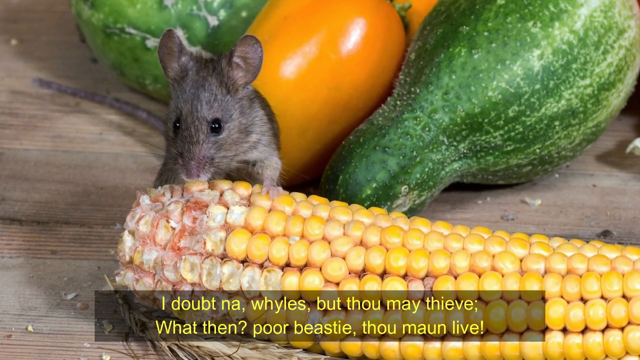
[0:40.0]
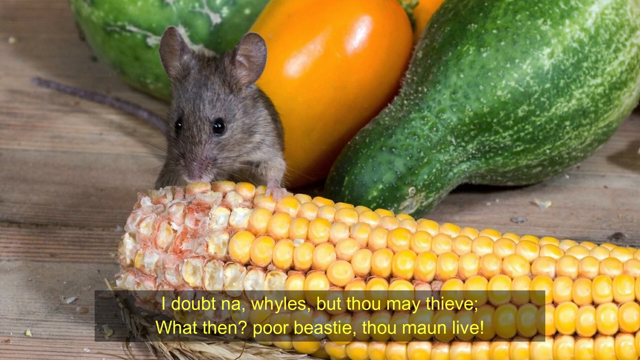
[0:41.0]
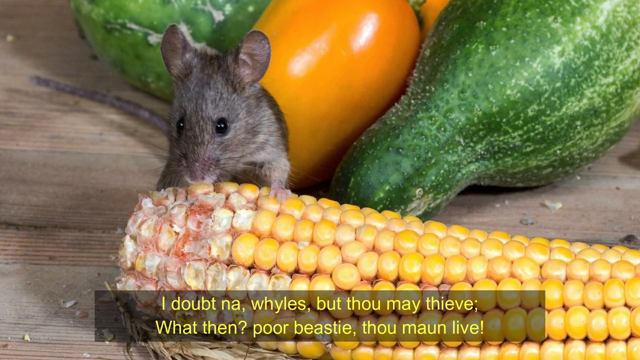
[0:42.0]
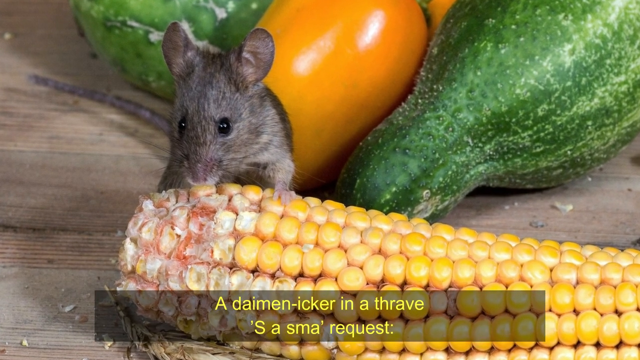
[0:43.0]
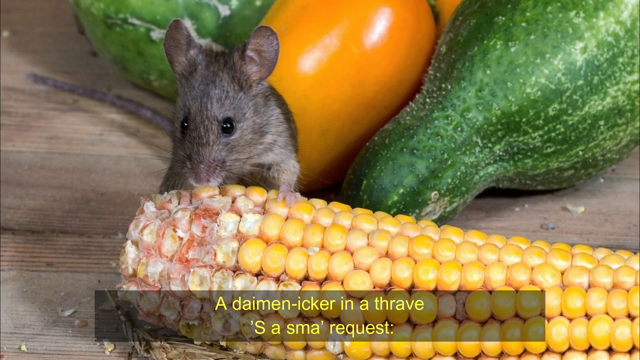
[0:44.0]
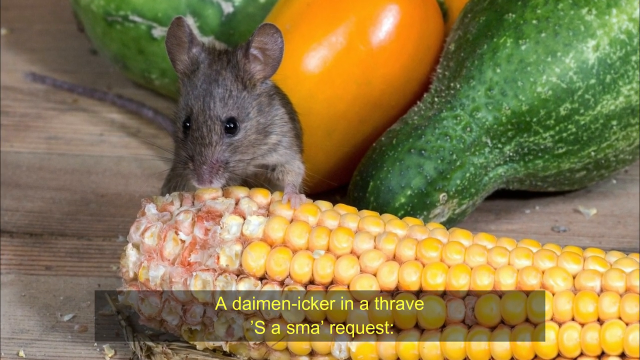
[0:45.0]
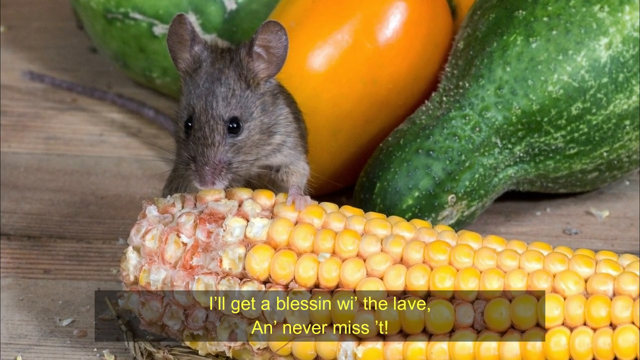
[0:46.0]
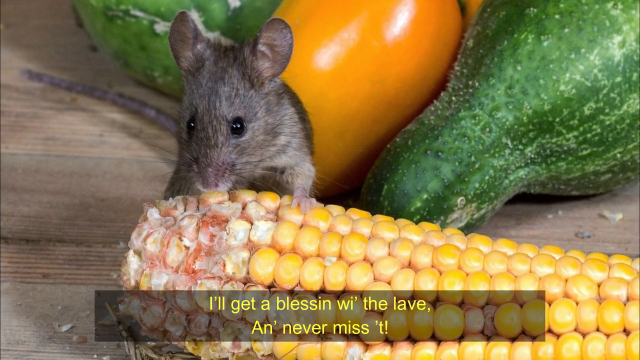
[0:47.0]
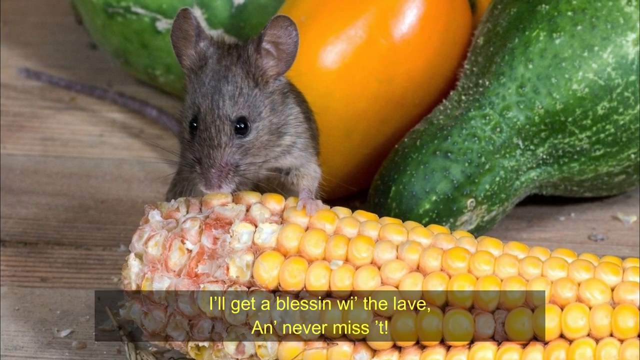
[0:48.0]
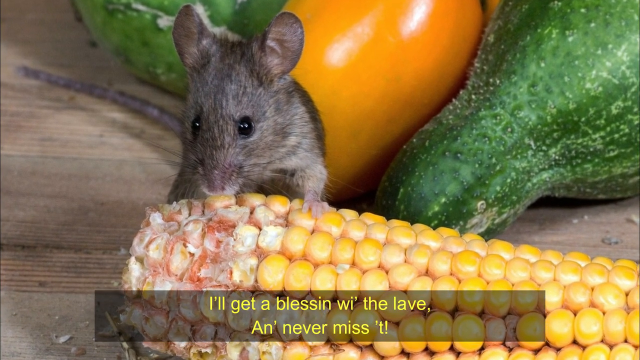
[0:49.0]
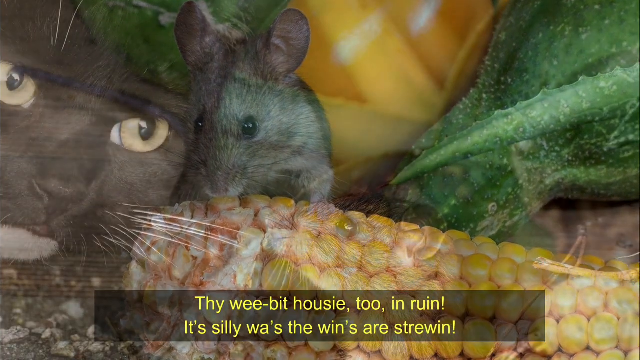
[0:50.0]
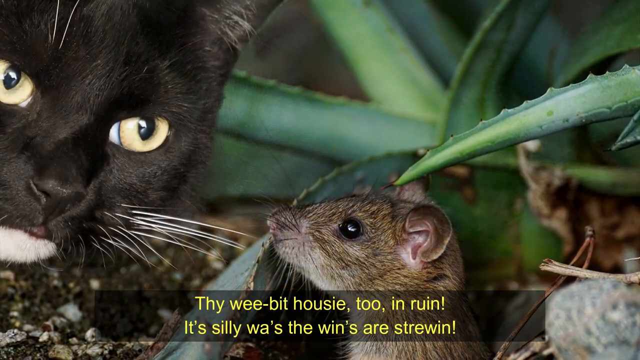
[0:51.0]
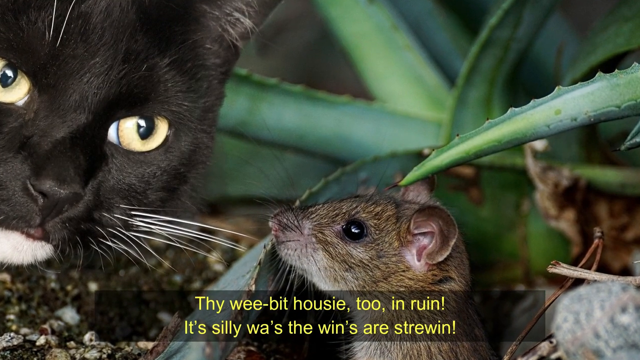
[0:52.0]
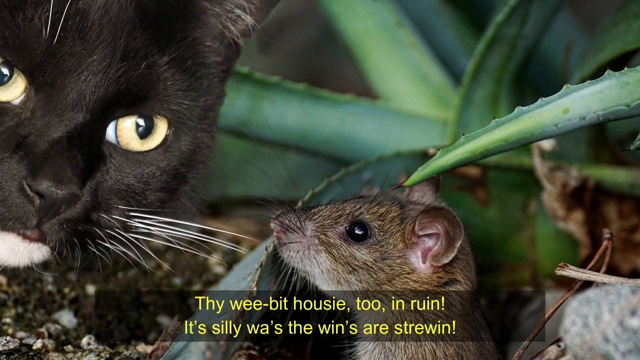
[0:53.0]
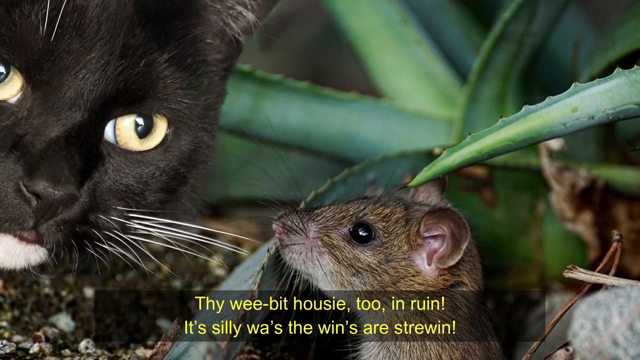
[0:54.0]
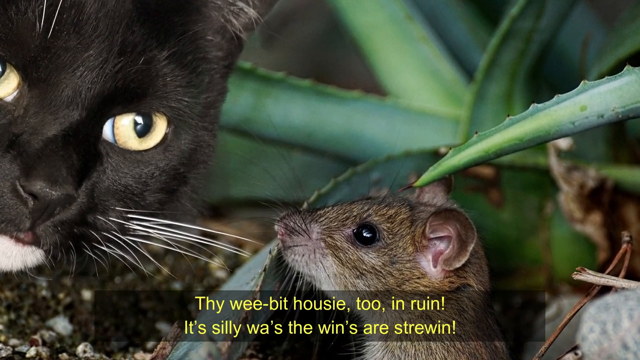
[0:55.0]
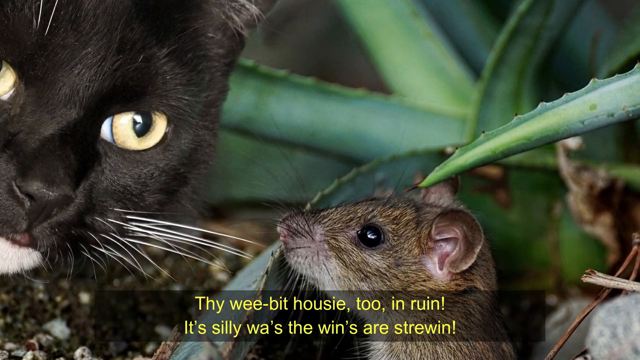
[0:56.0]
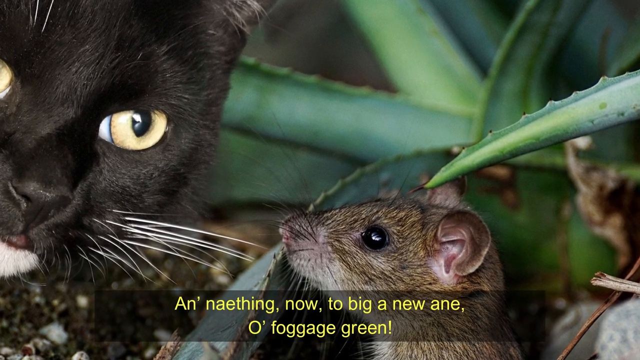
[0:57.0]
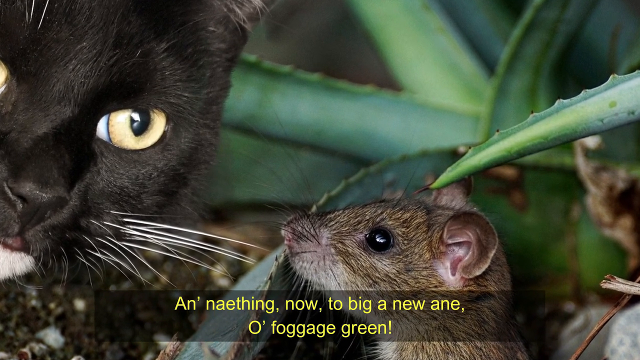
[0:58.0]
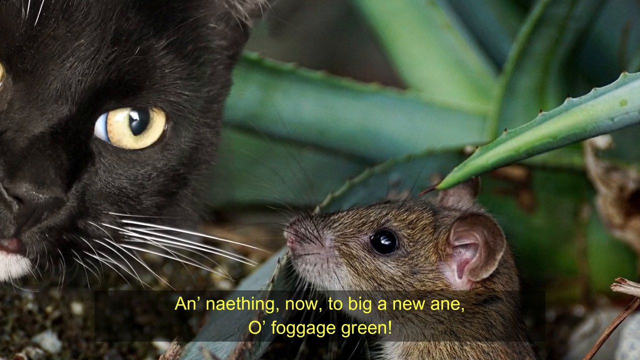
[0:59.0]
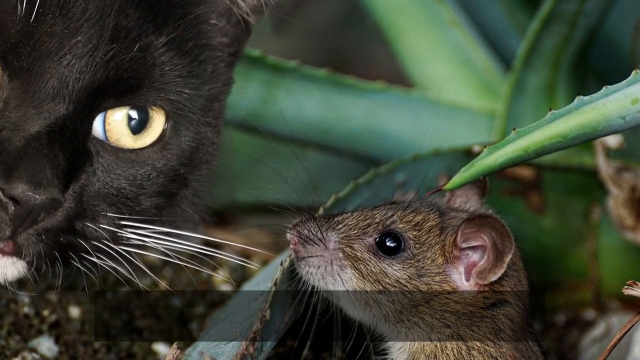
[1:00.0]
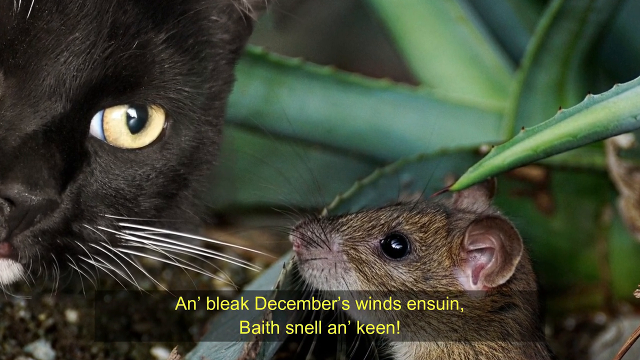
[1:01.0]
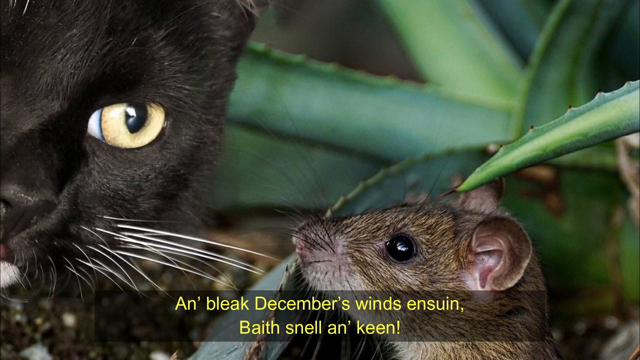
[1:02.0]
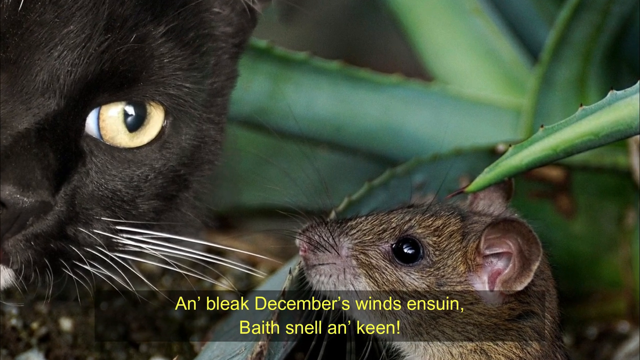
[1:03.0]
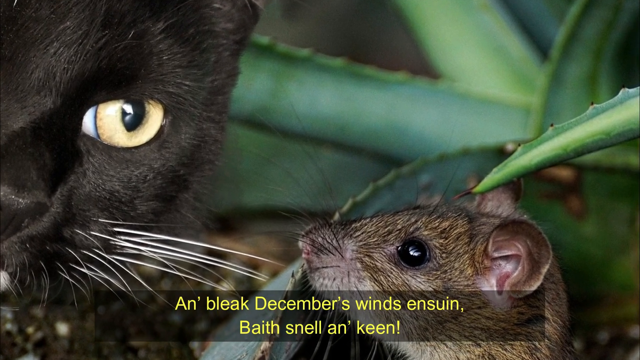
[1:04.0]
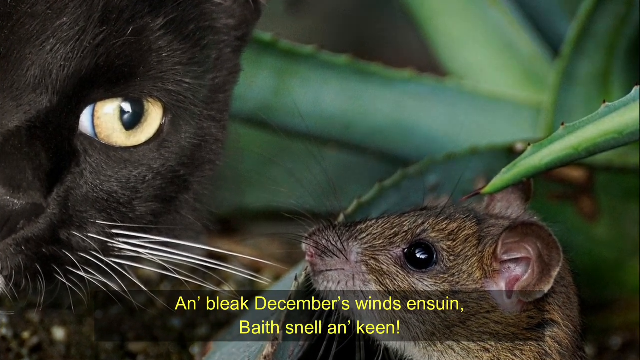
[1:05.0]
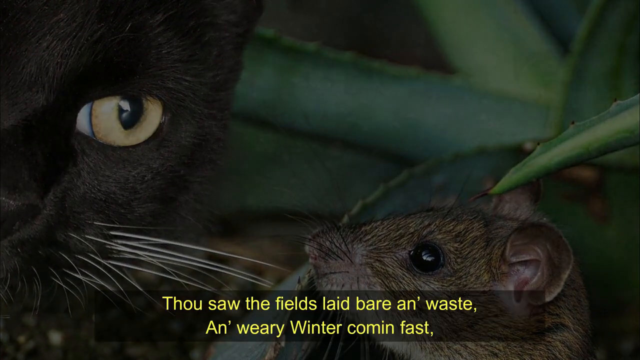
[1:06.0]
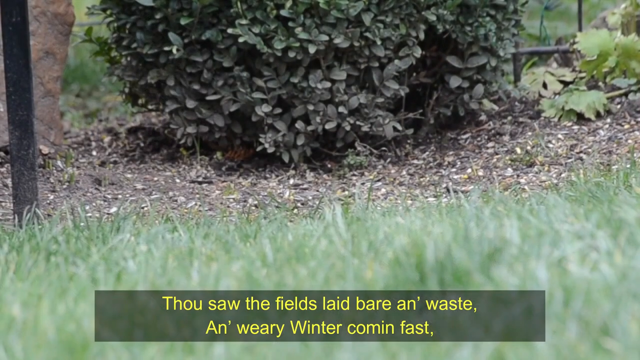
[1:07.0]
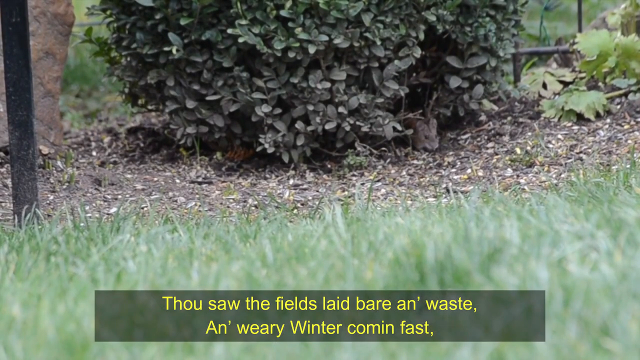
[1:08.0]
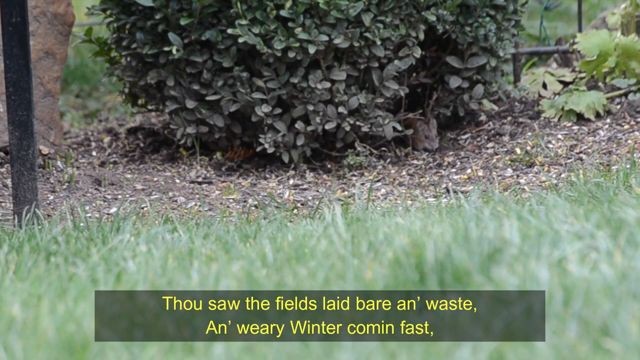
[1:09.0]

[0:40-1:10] The mouse on the table feeds on the corncob with vegetables in the background as the camera slowly zooms in on it. The text at the bottom reads "a daimen-icker in a thrave s' a sma' request I'll get a blessing, wi the lave, and never miss 't. Thy wee bit housie too." The image then shifts to a mouse trying to hide under some aloe leaves, with aloe plant all around, while a black cat with a white chin and golden eyes leans in towards it. The camera slowly zooms in on the mouse, which is looking at the cat. The words at the bottom read "And naething now" and then "an bleak December's winds ensuin, baith snell and keen. Thou saw the fields laid bare in waste, and weary winter coming fast." Next the image changes to a scene with a bush in the background, grass in the foreground, dirt and pebbles in between, and maybe some other plants around. A little brownish field mouse kind of scurries out from under the bush.